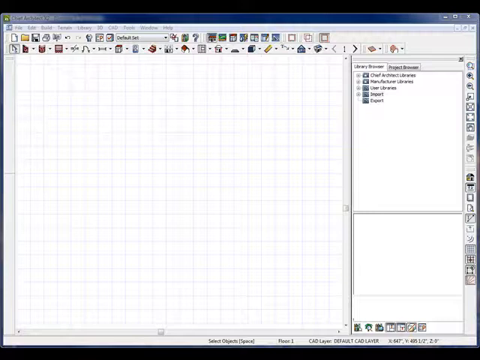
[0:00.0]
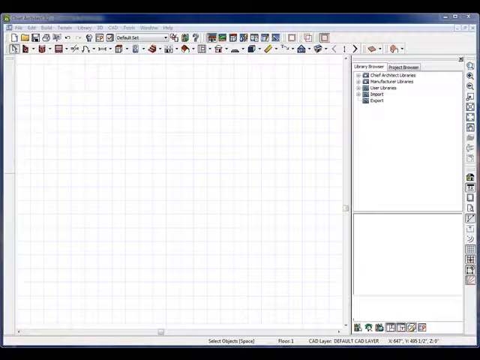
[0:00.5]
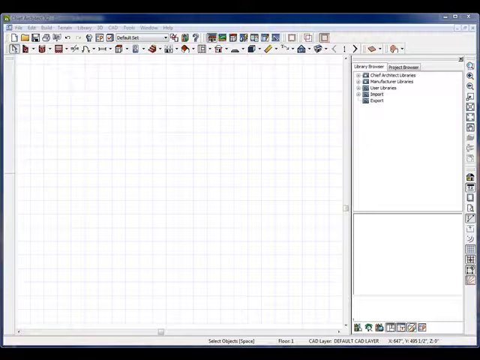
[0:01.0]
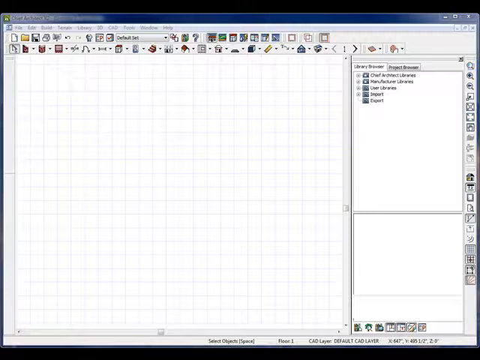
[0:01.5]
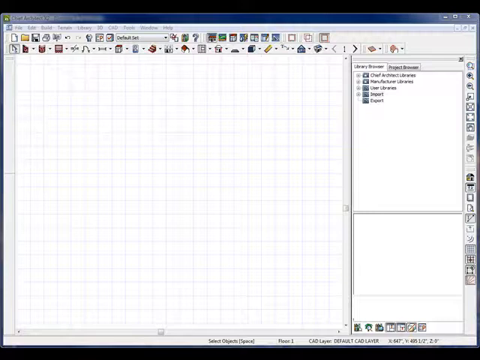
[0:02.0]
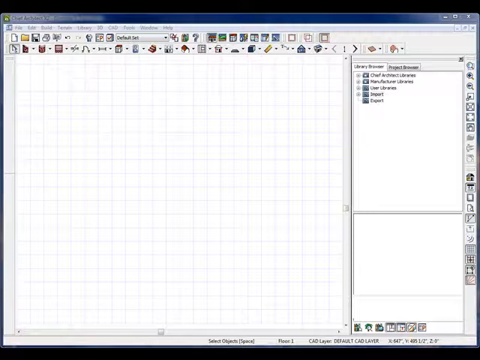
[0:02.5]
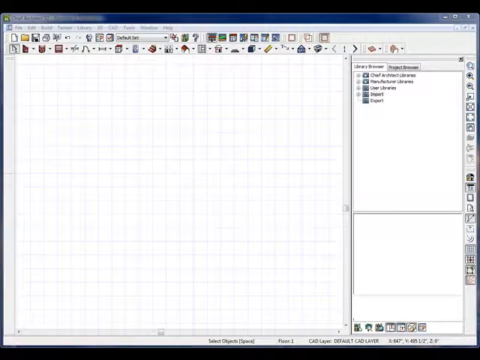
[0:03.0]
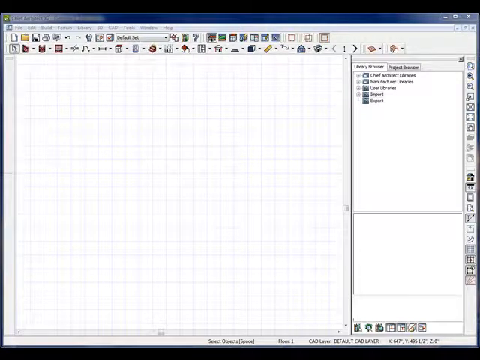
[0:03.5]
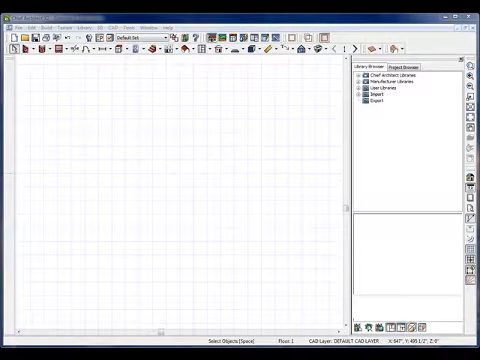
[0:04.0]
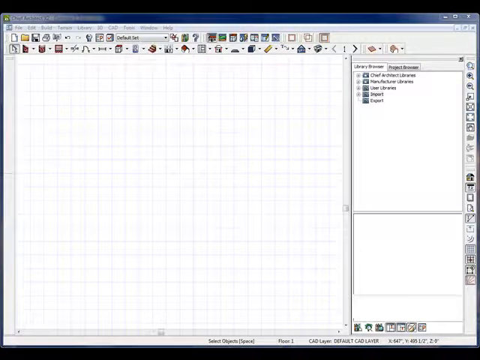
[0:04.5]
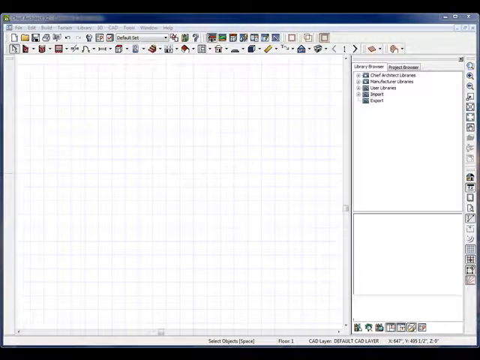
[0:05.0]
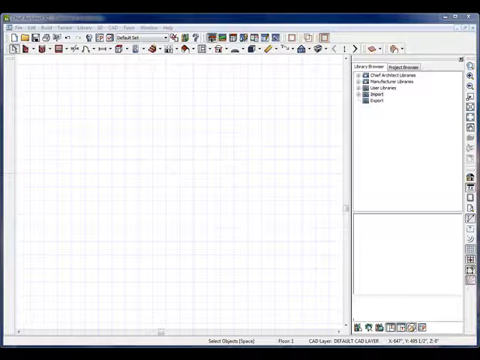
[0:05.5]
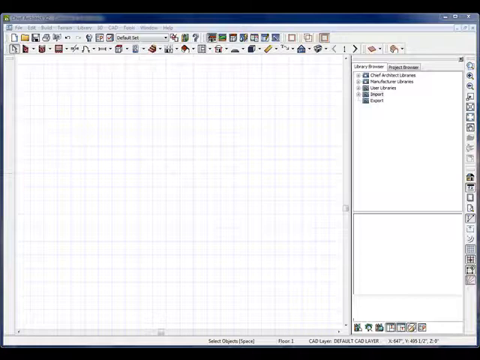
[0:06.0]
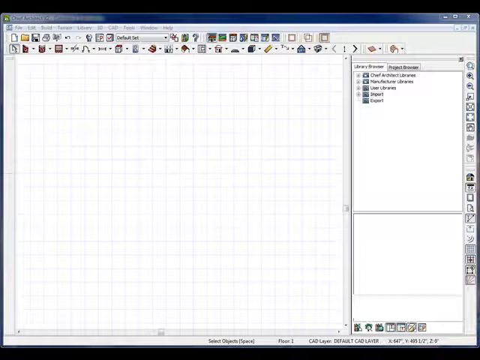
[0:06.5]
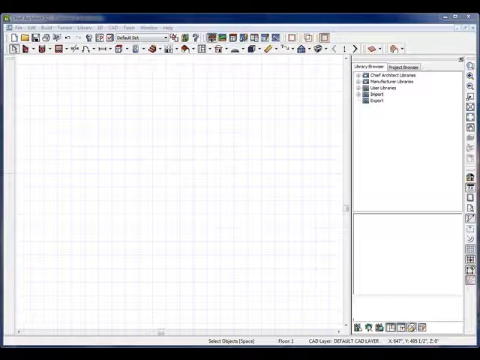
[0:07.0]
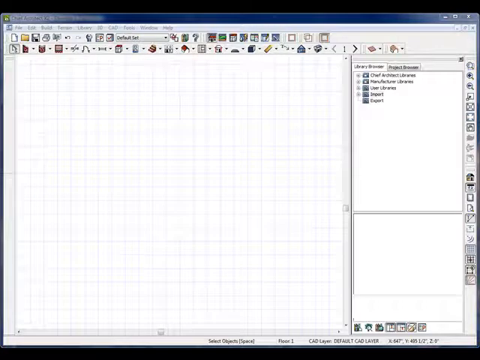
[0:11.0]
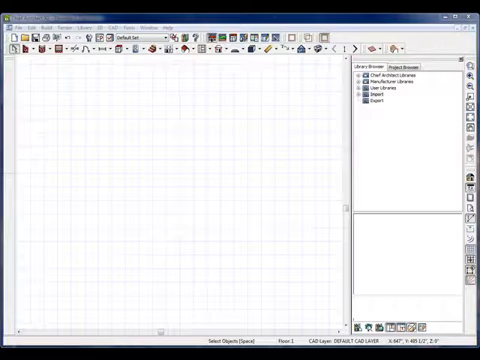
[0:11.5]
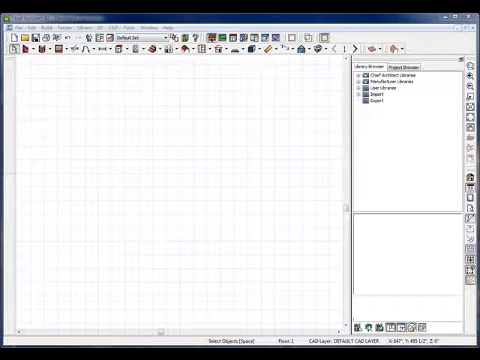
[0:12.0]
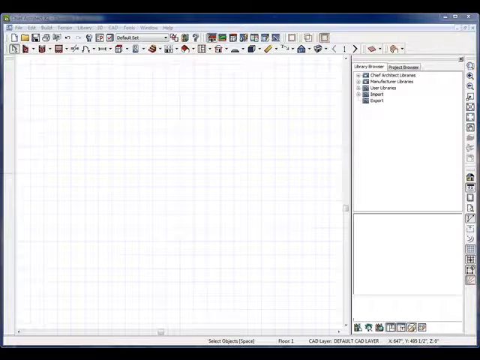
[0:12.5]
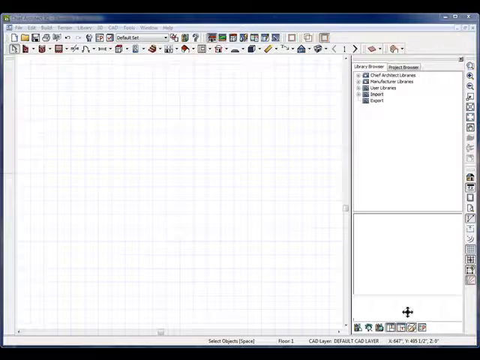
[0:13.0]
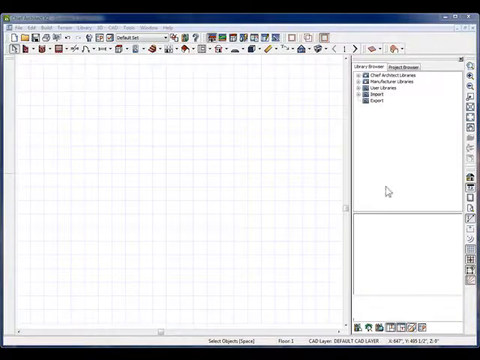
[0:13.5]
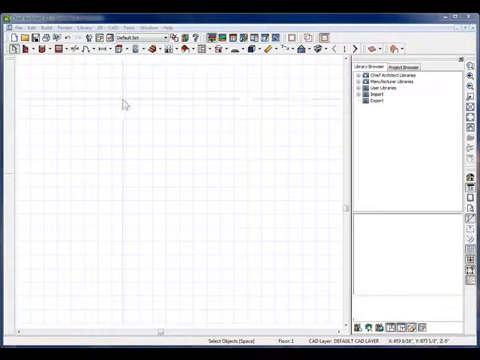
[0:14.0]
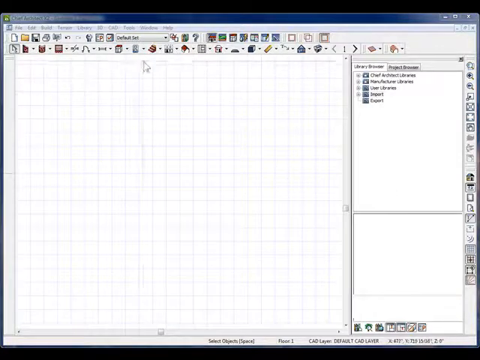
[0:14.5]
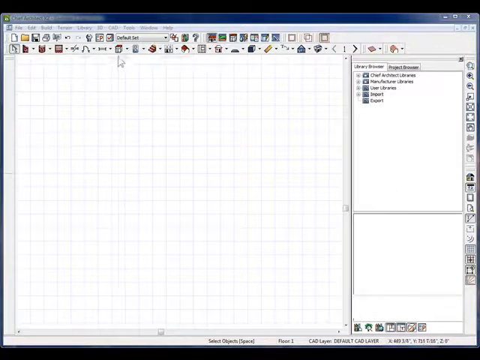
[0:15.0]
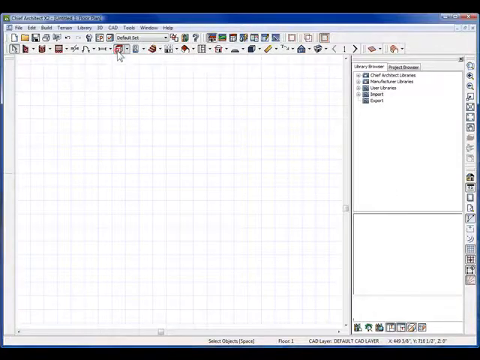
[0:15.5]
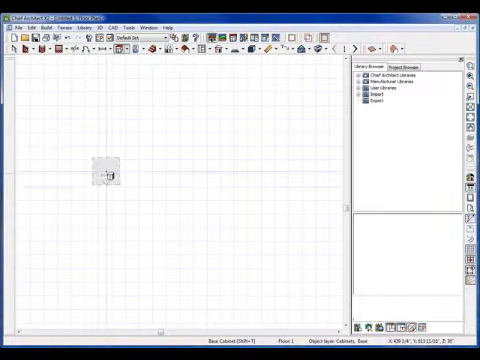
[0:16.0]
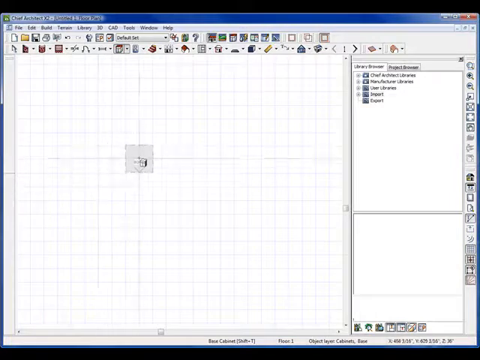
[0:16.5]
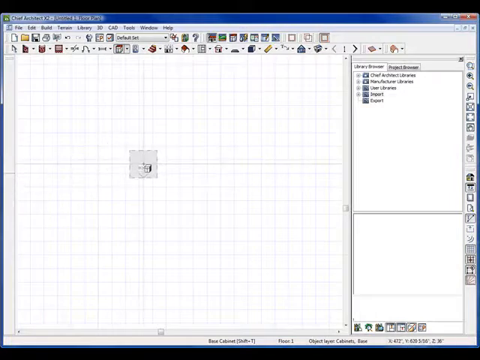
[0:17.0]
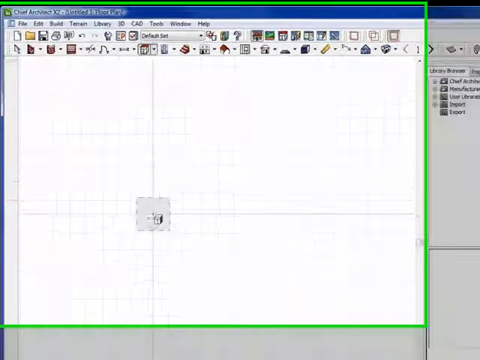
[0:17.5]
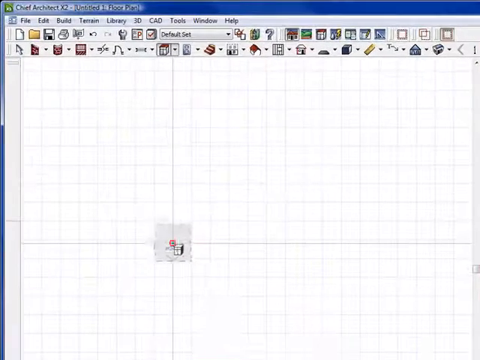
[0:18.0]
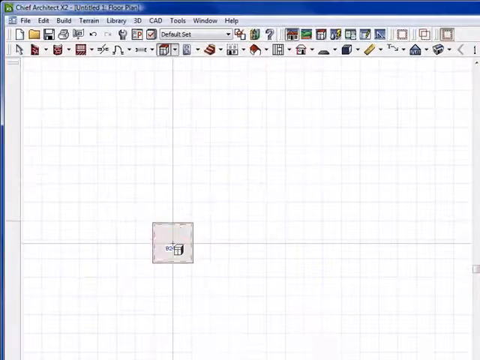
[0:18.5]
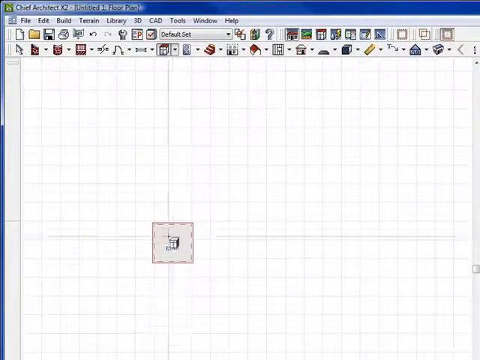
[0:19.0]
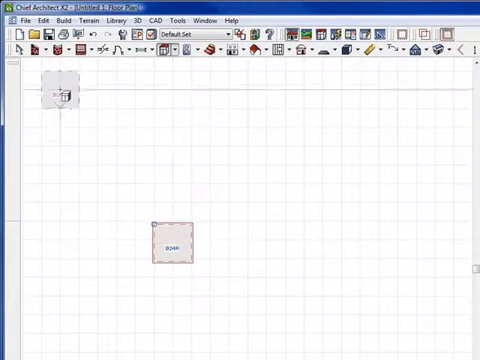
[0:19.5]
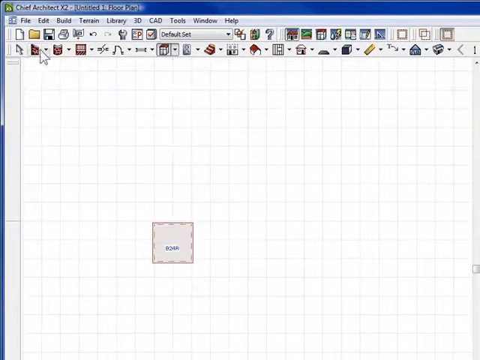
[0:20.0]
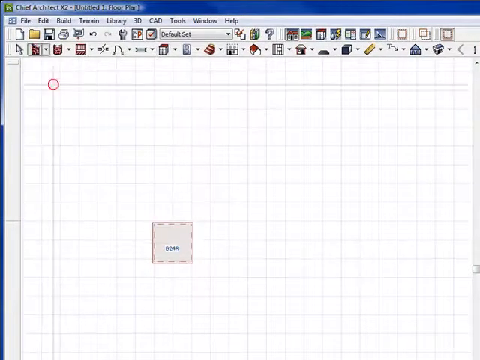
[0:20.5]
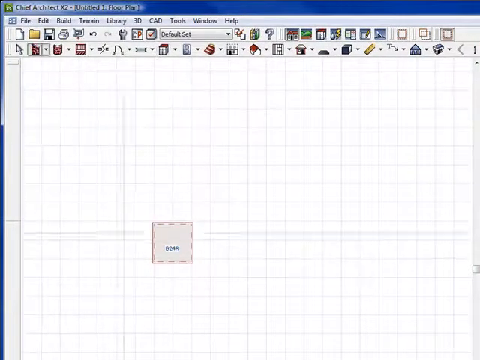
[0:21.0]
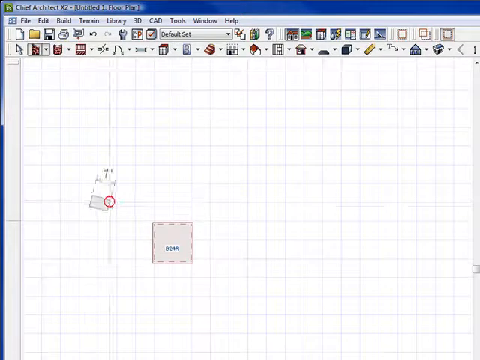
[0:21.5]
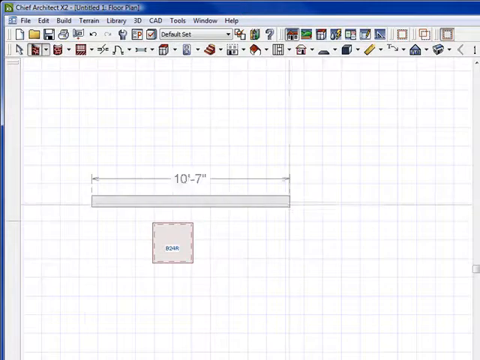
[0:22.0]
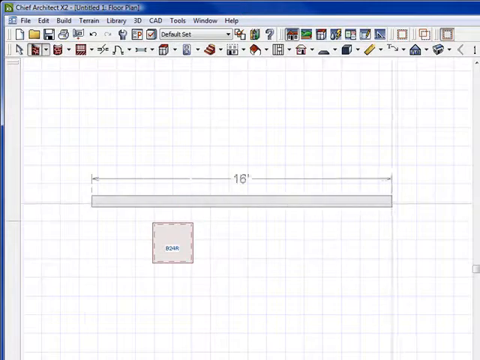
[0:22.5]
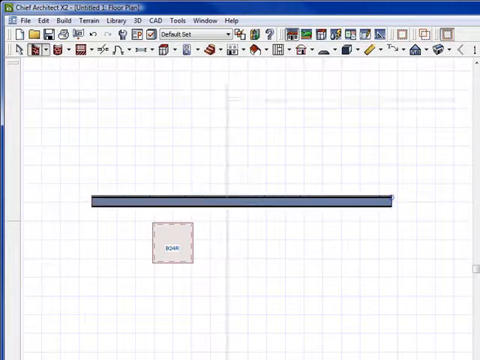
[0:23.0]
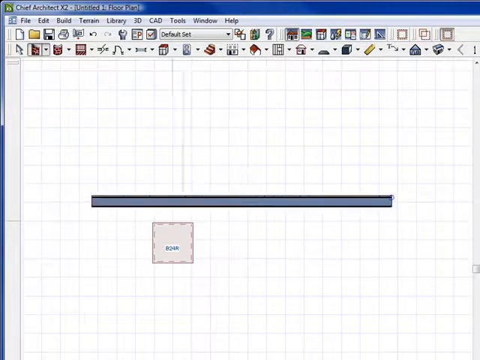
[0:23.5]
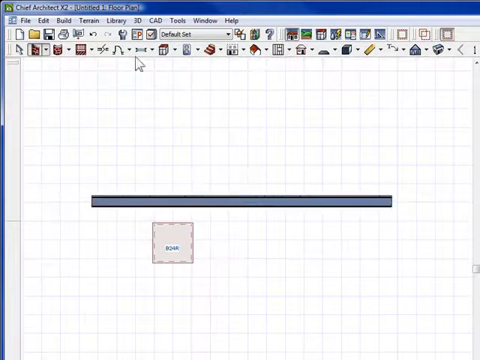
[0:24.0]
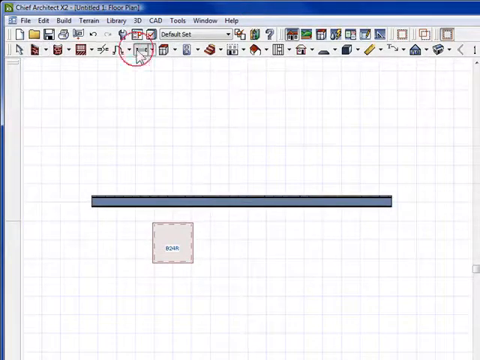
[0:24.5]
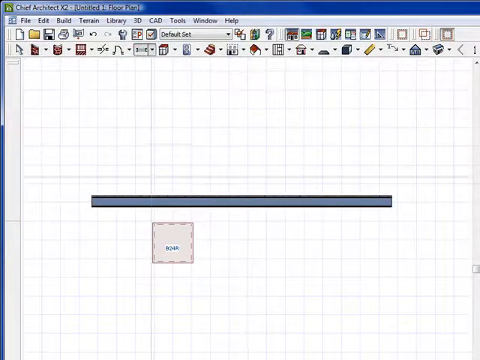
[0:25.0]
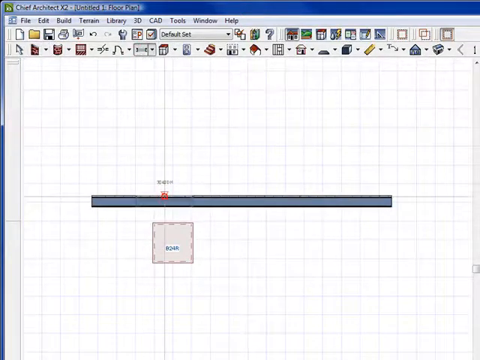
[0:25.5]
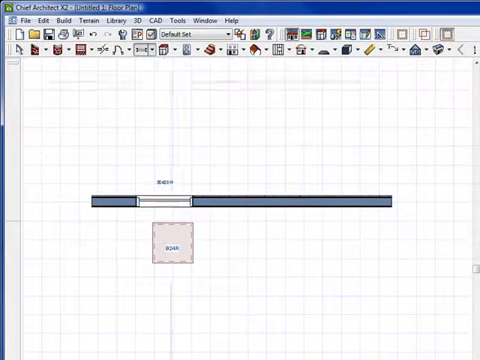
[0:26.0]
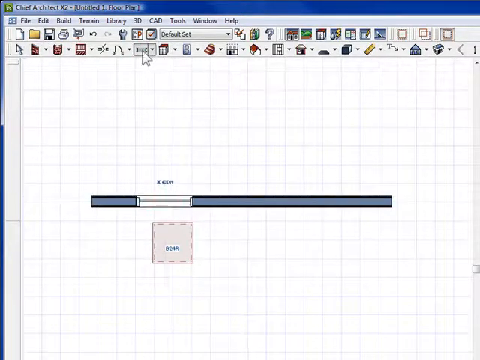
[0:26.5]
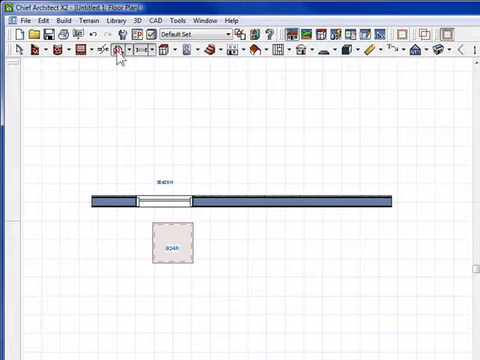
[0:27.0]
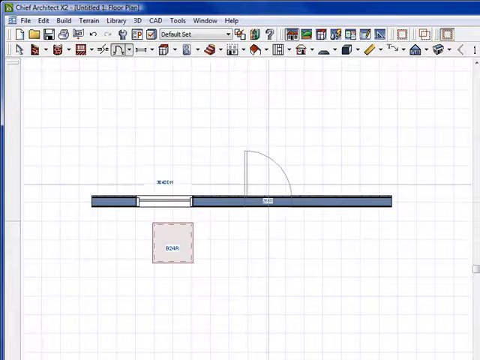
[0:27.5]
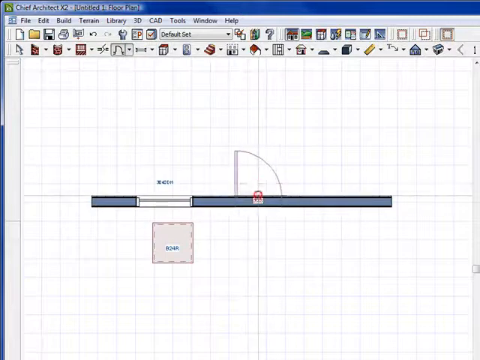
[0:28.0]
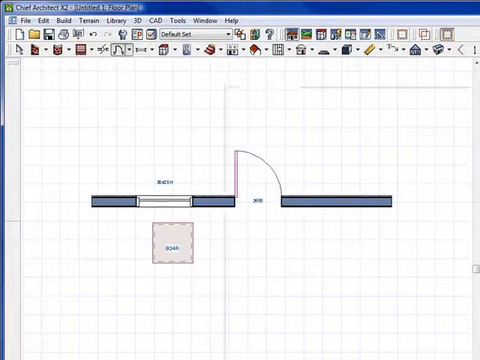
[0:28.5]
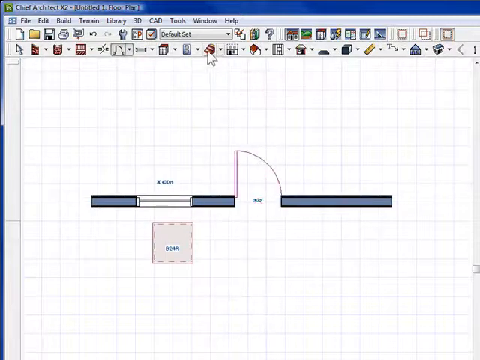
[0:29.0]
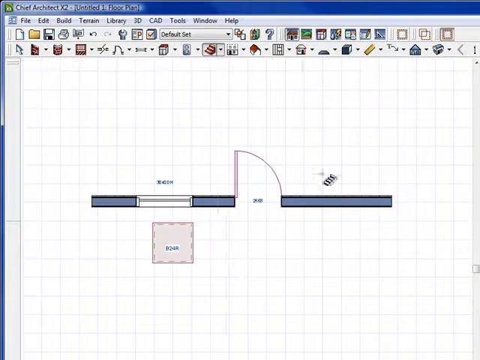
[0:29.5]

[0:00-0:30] A website or computer interface shows a row of colorful icons across the top, a grid pattern that looks almost like a computer version of graph paper, and a menu in the upper right with a few lines of text. For about 15 seconds nothing happens and the screen stays blank. Then a cursor comes onto the screen and clicks one of the icons at the top, just left of center, which brings back the graph paper. As the cursor is dragged around, a shadowed gray box appears at the intersection of a horizontal and a vertical line, and those two slightly darker lines move along with it. The view focuses in a little, and it appears a square has been stamped or left in one of the grid areas. As the square with the crossbars is moved around again, it seems to leave another kind of imprint: a small light tan square takes up part of the grid. The tool then creates a long gray bar above it, hovering above it and running almost its length. Next an angle appears to be created, or the bar is broken up by a pink half arc. Something seemingly mathematical is being done; there are labels, but it is not yet clear what is being created.